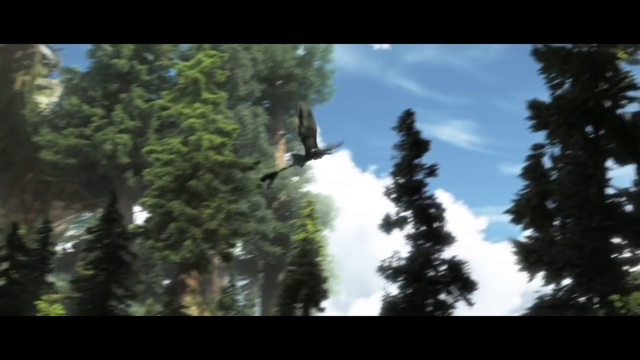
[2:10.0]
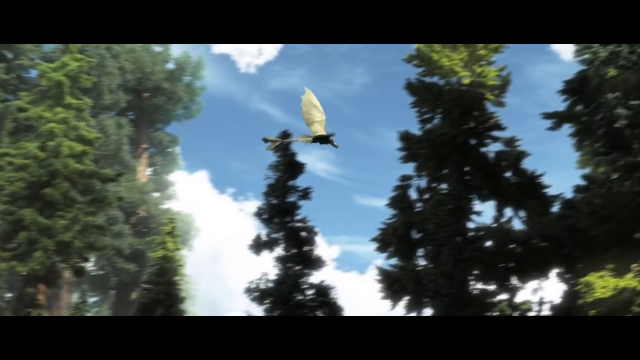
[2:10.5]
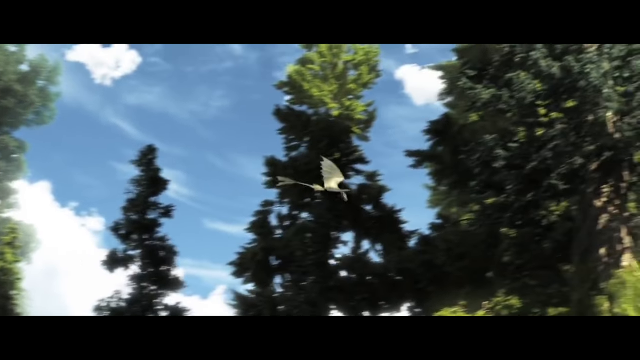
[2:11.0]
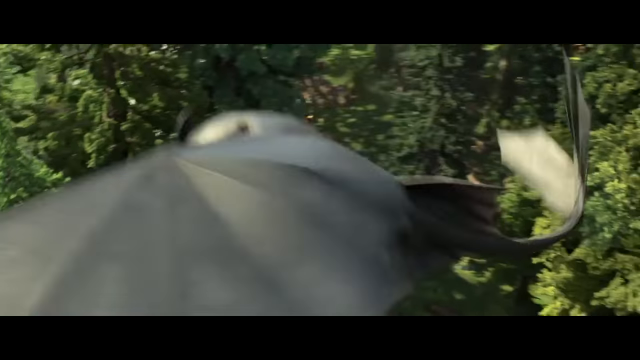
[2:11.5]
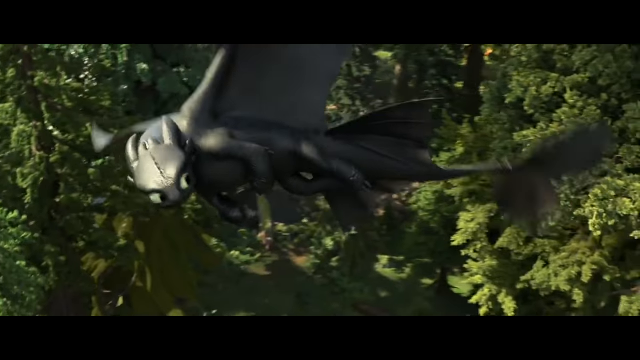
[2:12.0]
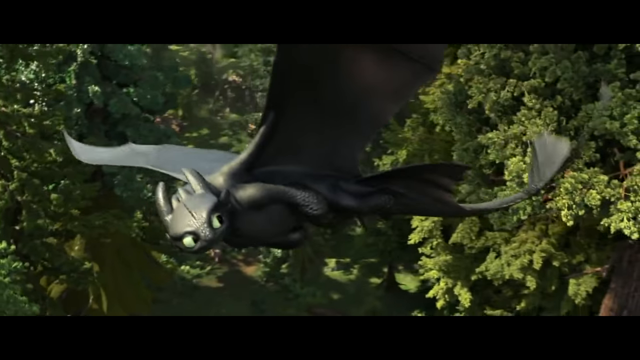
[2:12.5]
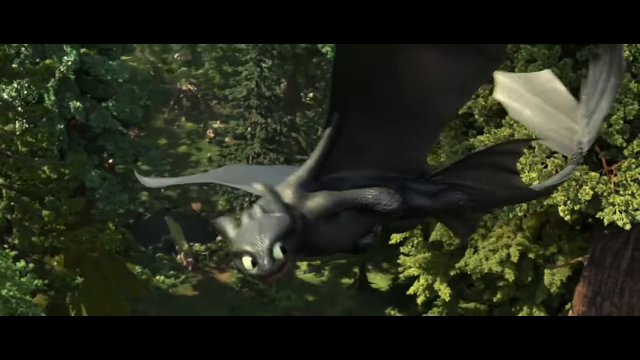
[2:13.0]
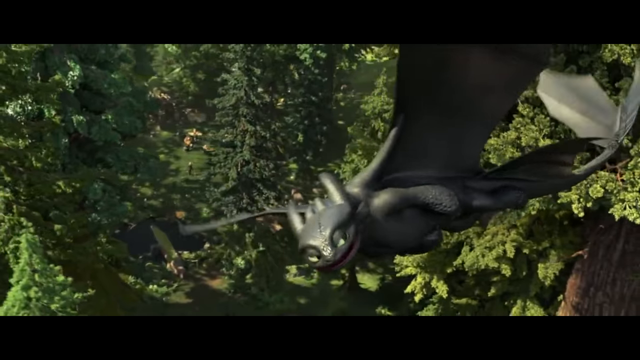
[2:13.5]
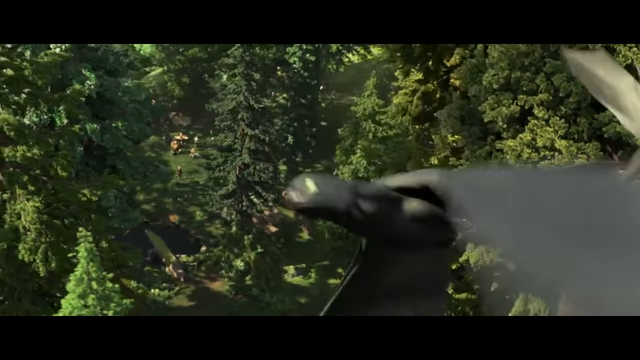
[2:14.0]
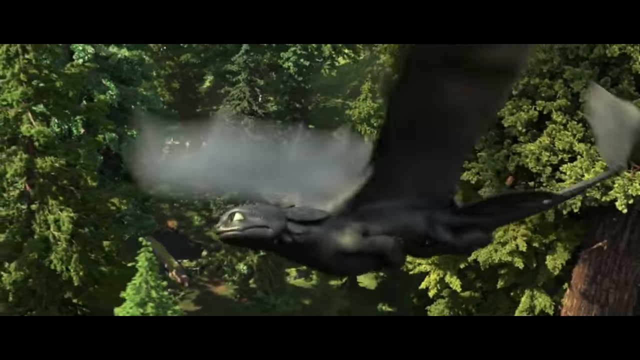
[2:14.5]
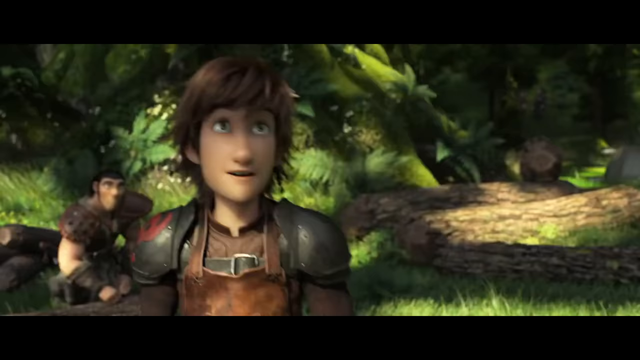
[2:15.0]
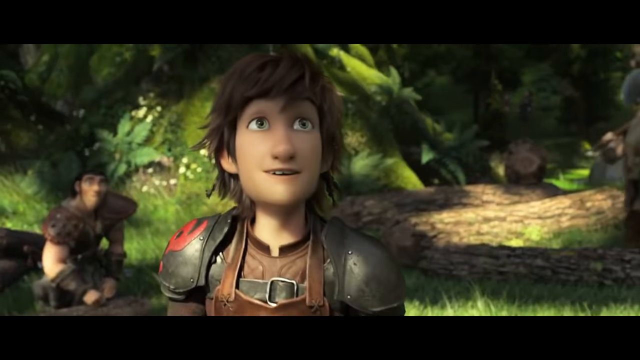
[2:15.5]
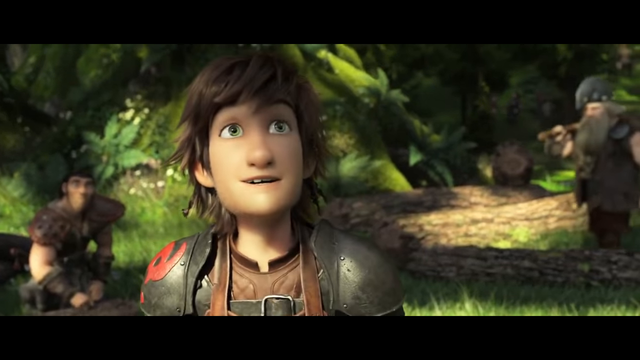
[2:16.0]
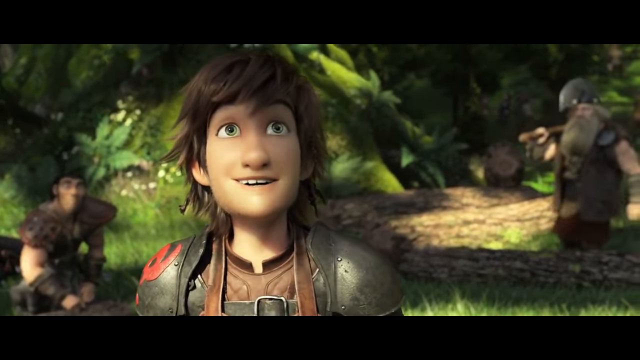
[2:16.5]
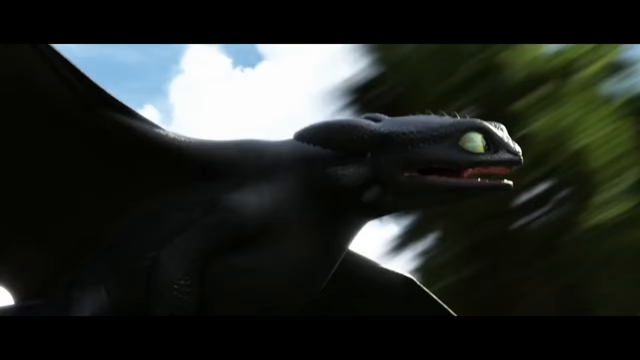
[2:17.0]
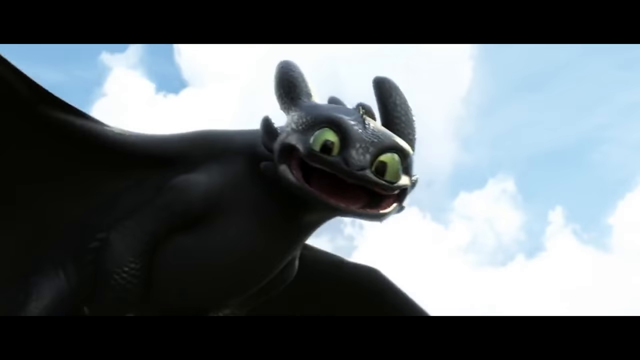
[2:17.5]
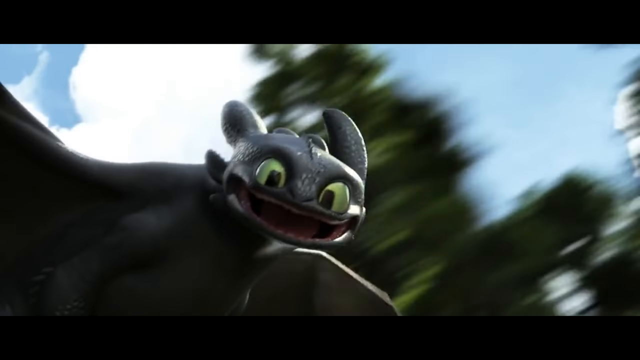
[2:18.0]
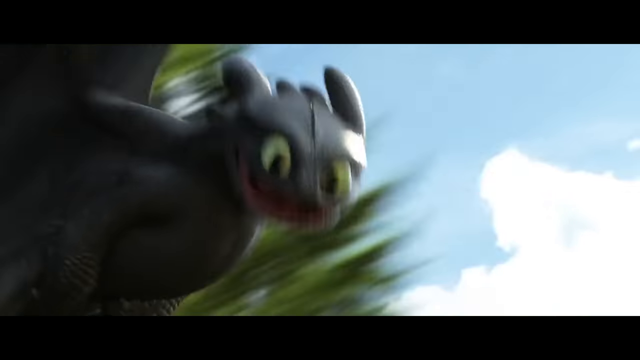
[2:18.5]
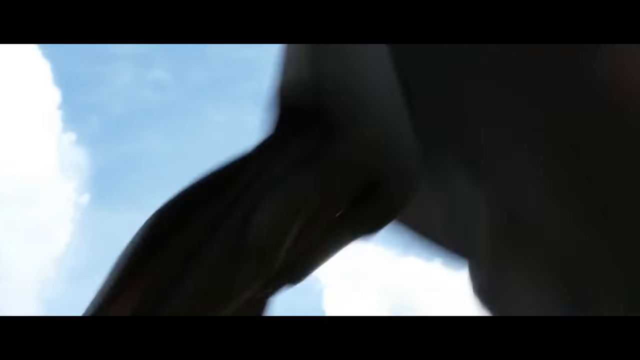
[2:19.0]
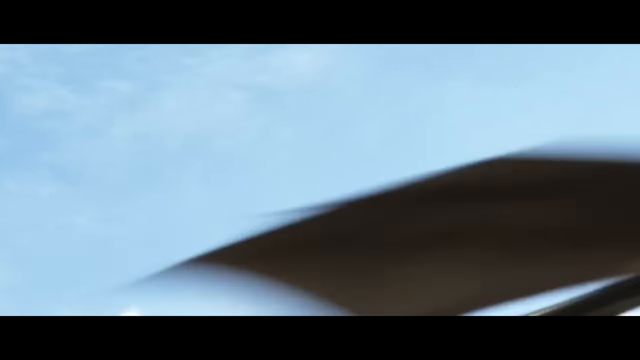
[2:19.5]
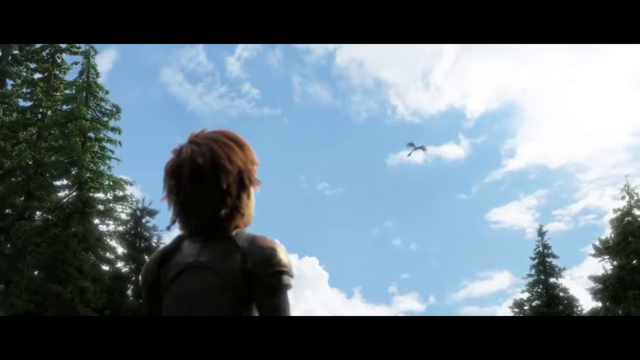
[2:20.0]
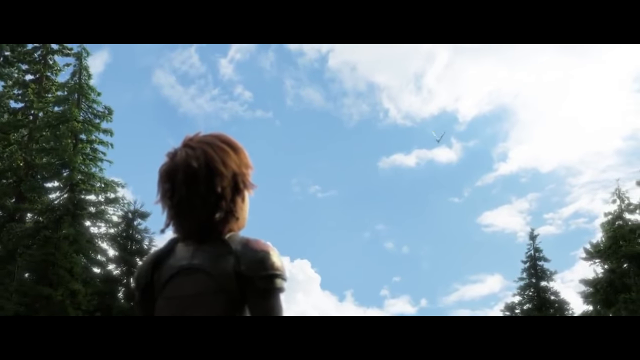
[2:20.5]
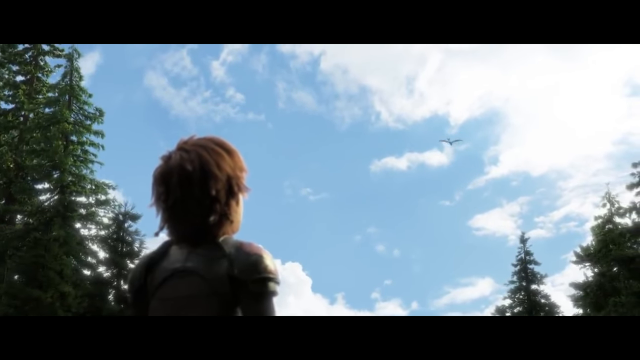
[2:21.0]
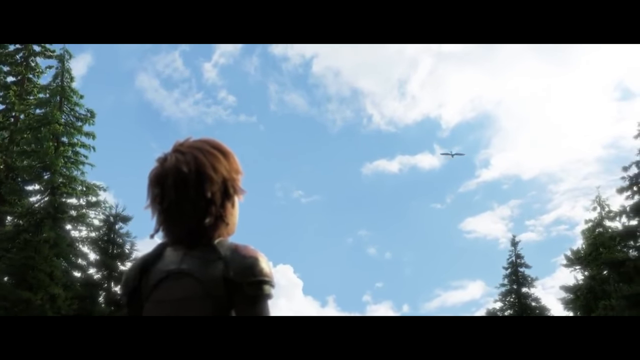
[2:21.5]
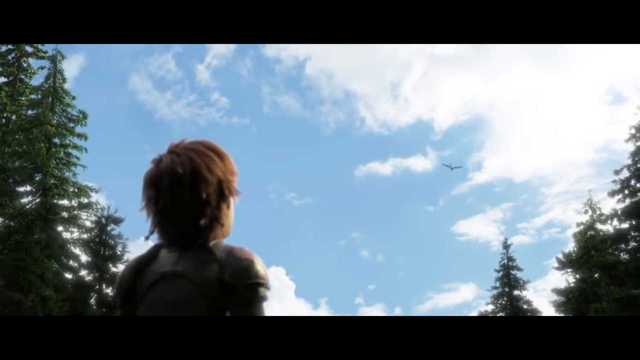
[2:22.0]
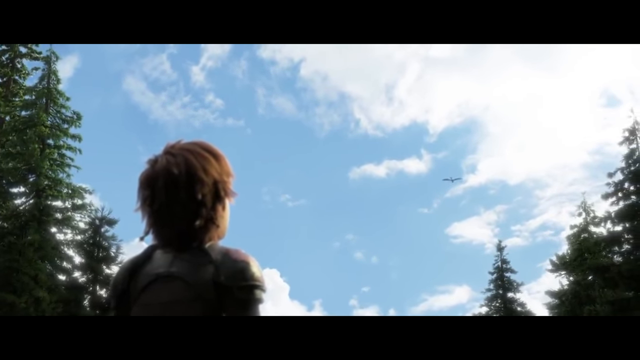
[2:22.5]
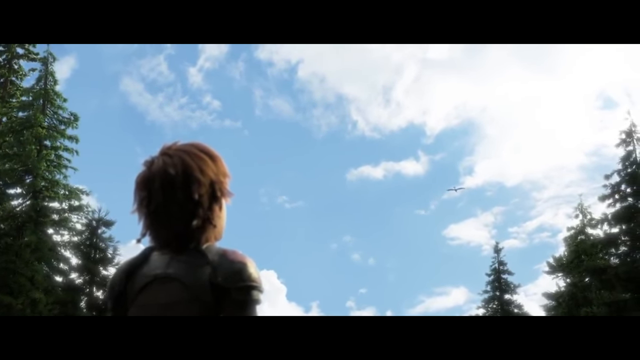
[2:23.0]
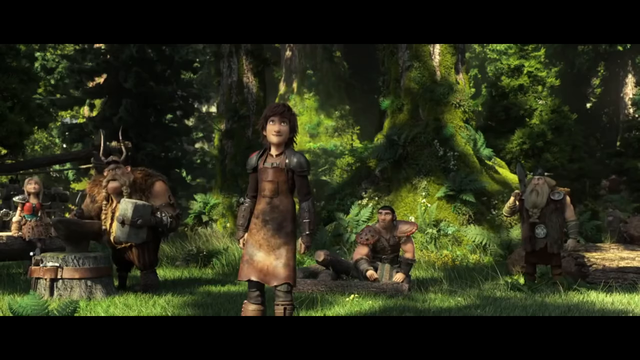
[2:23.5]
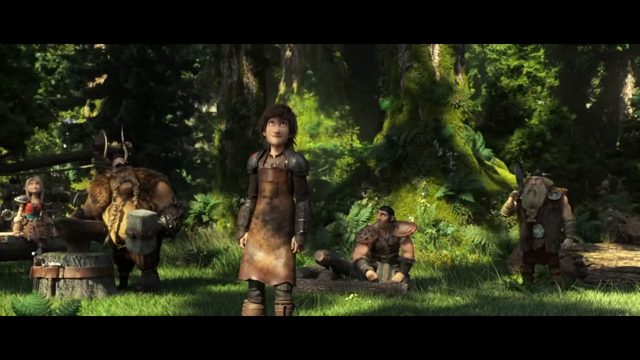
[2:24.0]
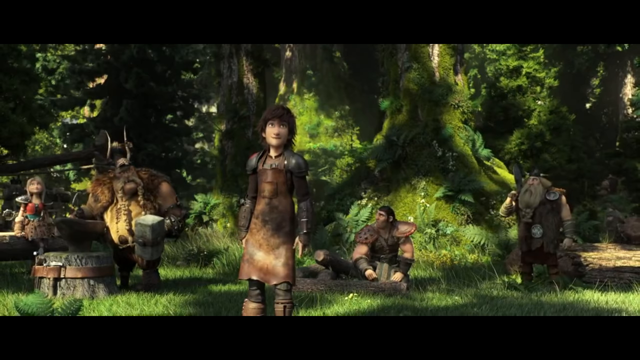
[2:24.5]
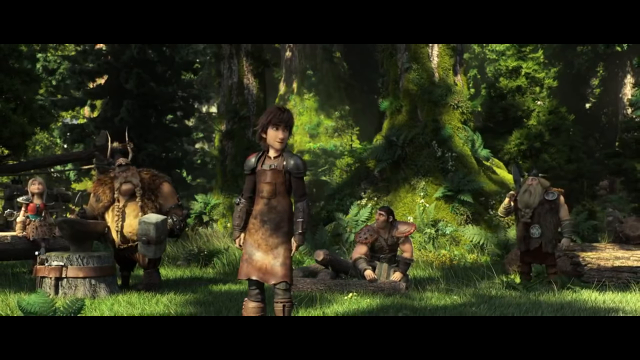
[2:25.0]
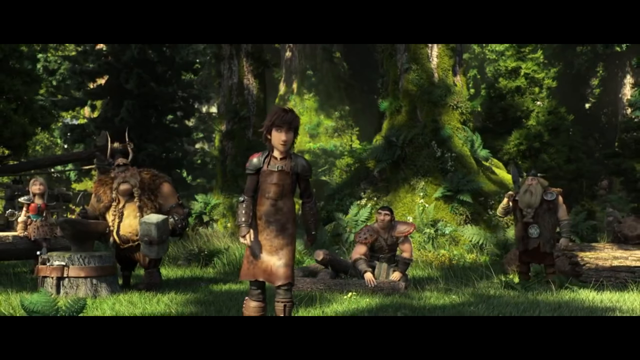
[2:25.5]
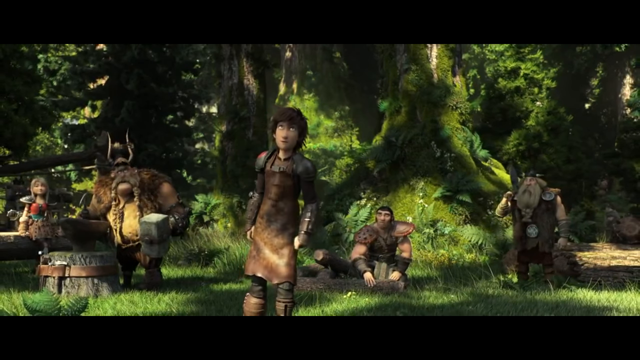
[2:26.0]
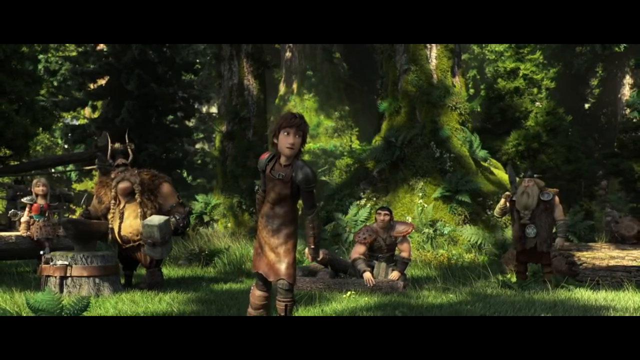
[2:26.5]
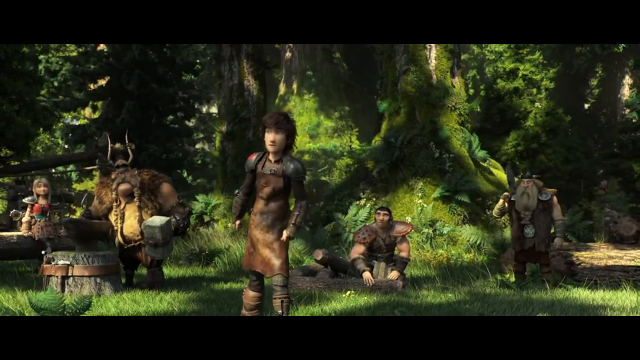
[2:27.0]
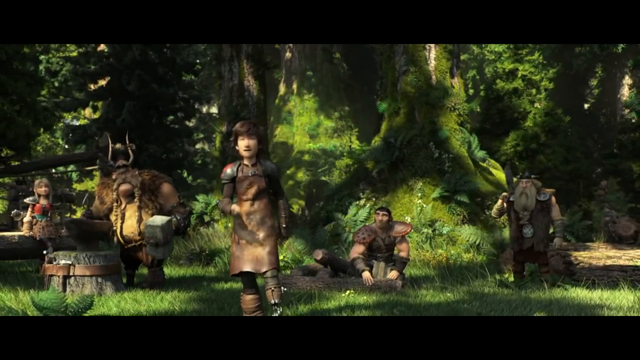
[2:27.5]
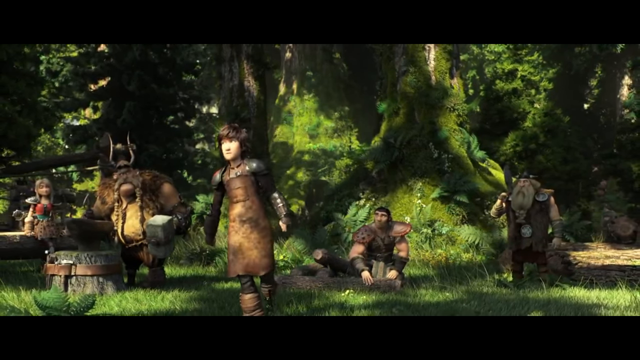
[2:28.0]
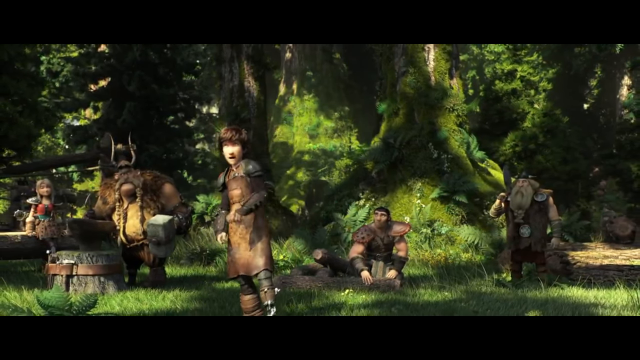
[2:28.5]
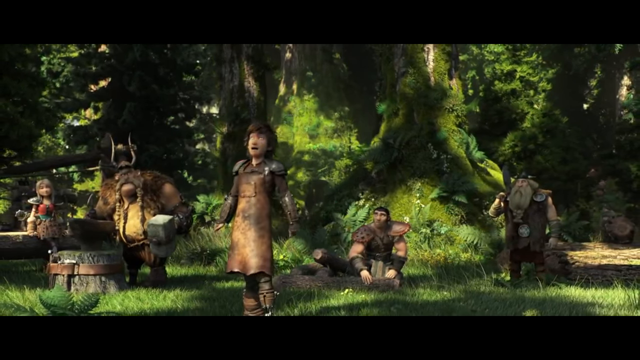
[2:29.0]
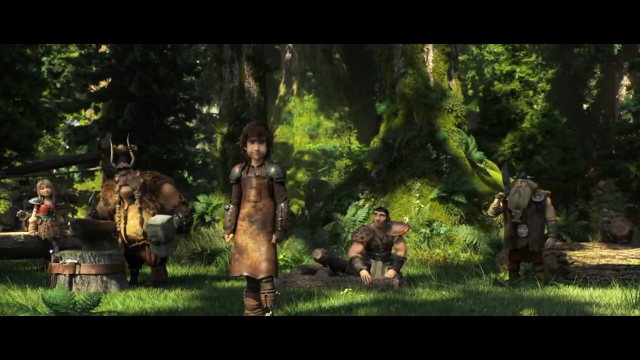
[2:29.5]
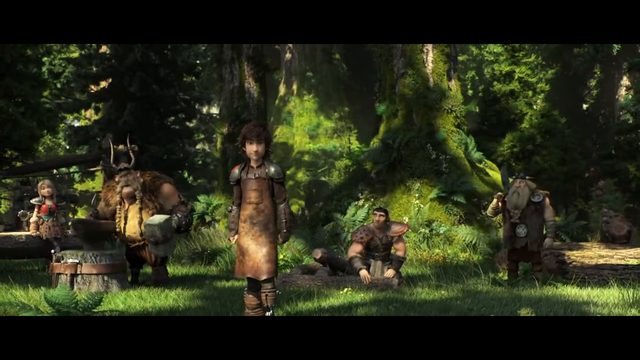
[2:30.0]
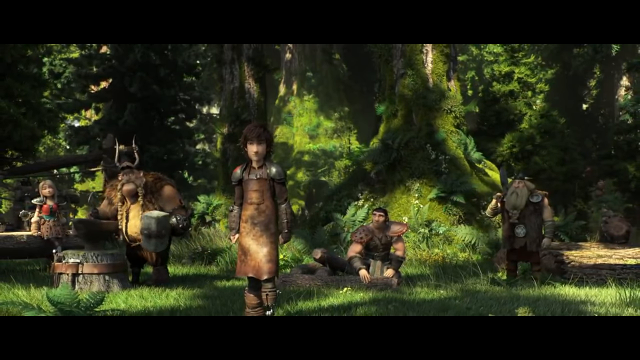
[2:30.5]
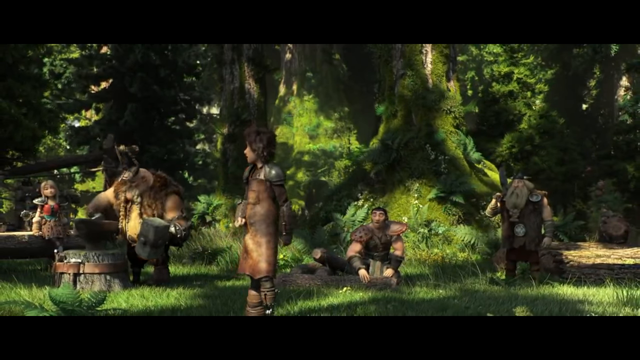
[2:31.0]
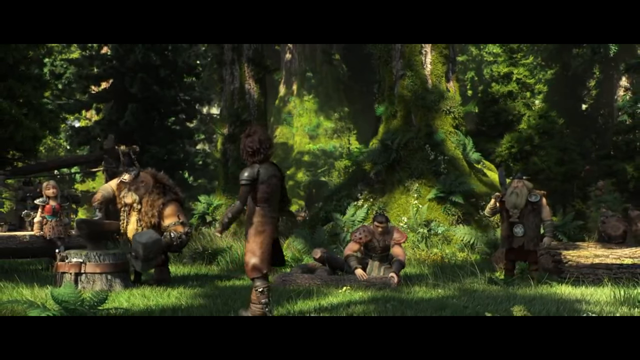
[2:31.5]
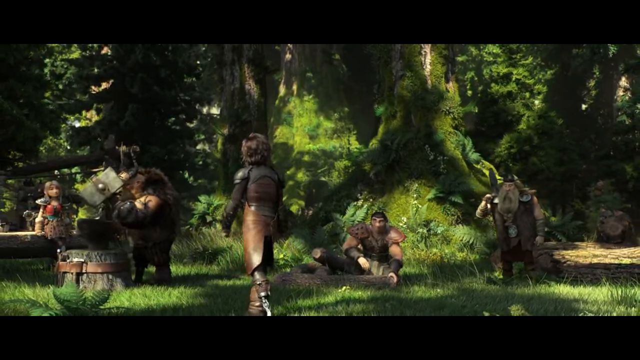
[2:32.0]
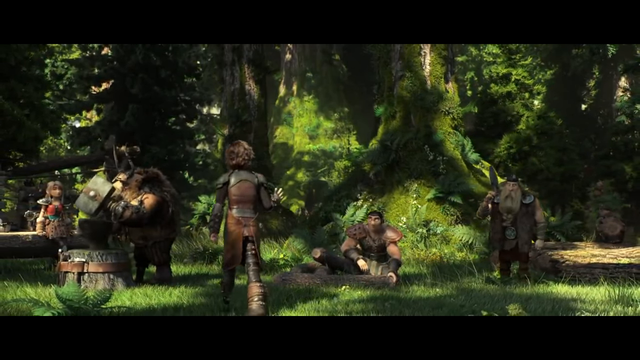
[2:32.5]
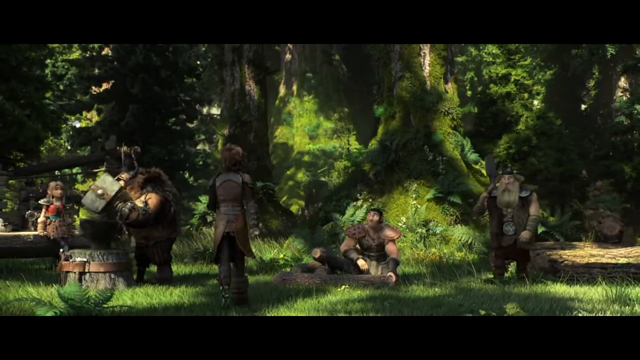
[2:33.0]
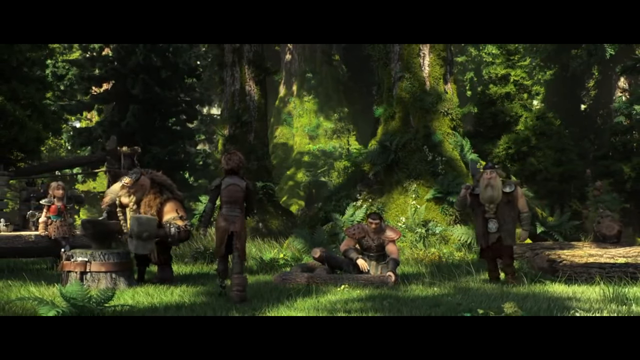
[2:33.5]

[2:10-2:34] The dragon is in mid-flight, heading toward the right side of the screen. The angle then changes so the dragon appears to go toward the left, then back to the right, and then it goes straight up into the sky. Everyone looks all the way up. The one who made the tail starts backing up, seeming a little awkward, maybe a little emotional. He takes a few steps back and turns around.